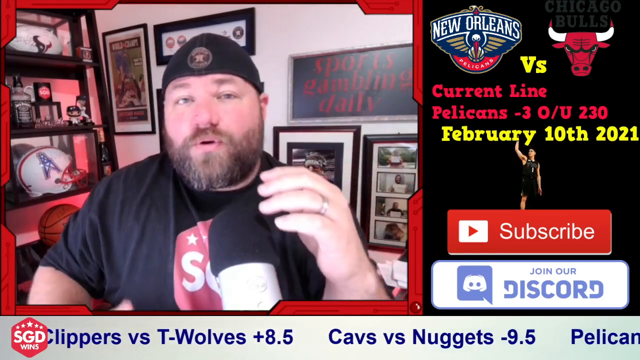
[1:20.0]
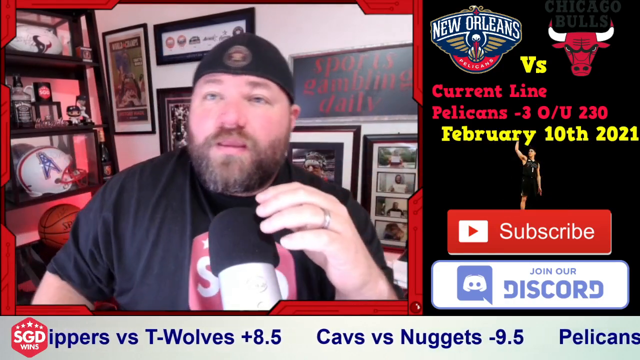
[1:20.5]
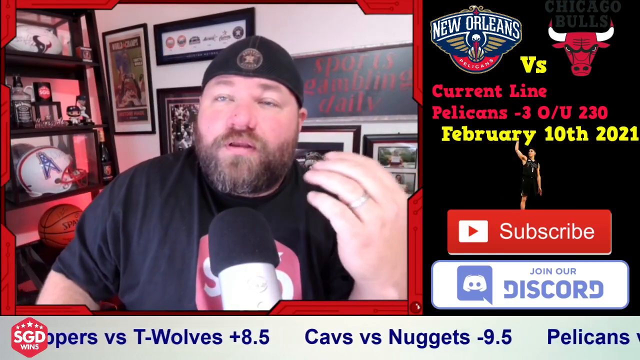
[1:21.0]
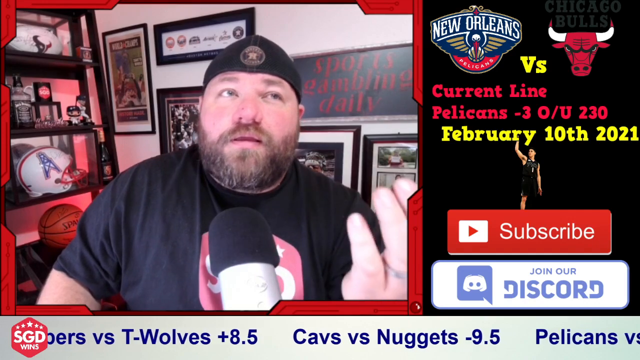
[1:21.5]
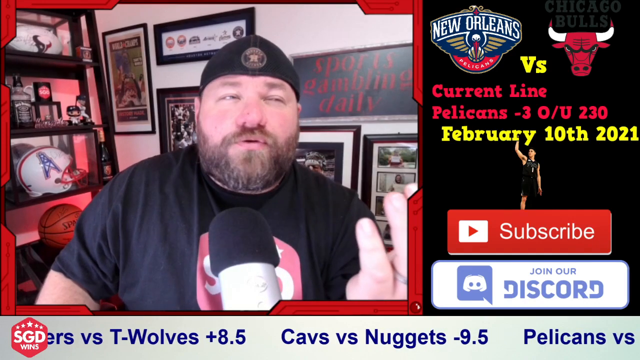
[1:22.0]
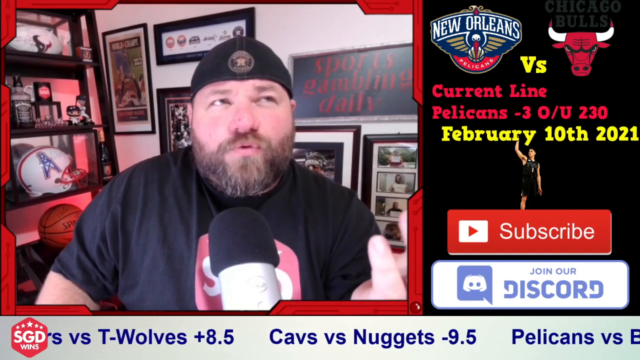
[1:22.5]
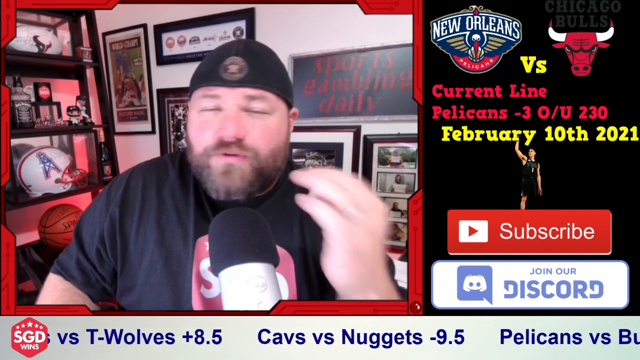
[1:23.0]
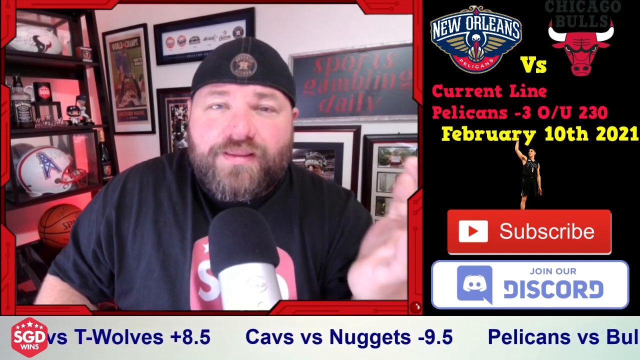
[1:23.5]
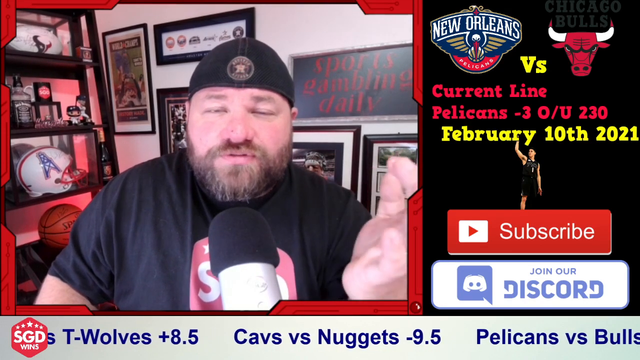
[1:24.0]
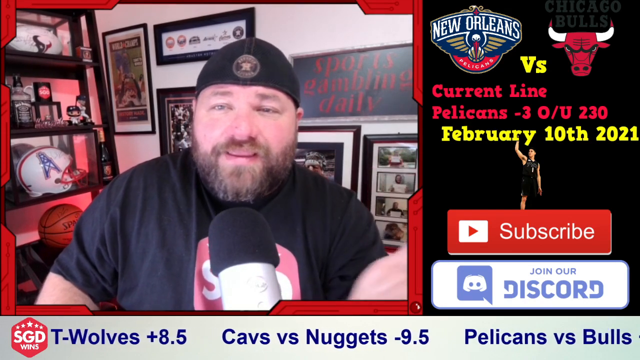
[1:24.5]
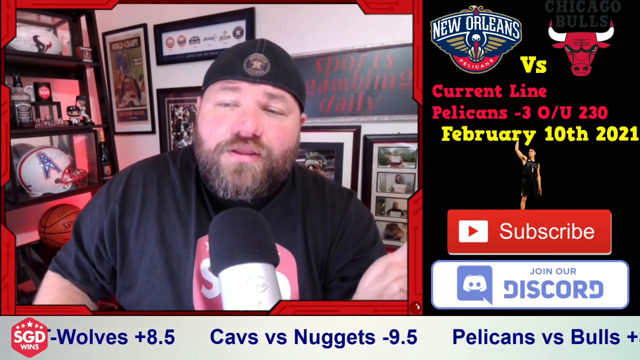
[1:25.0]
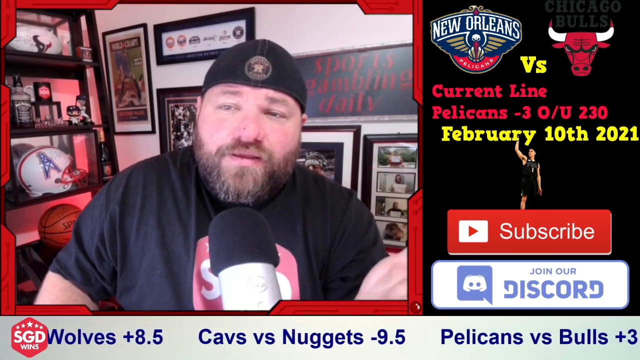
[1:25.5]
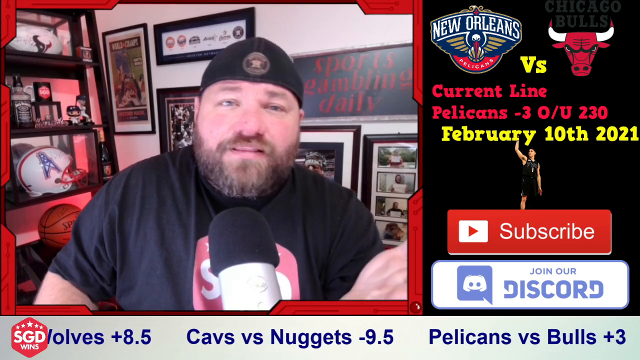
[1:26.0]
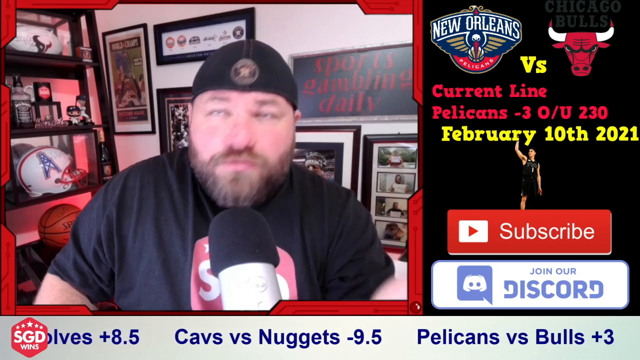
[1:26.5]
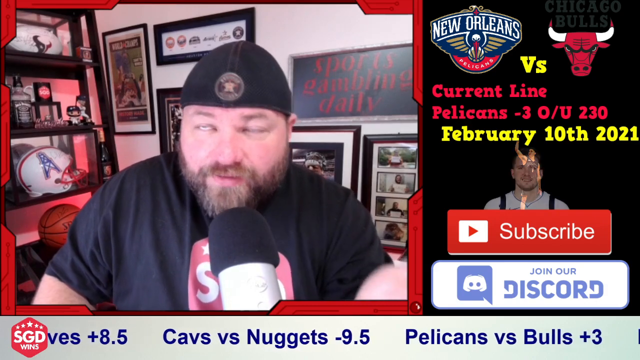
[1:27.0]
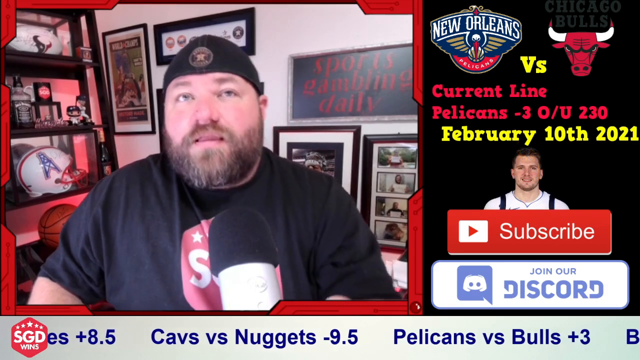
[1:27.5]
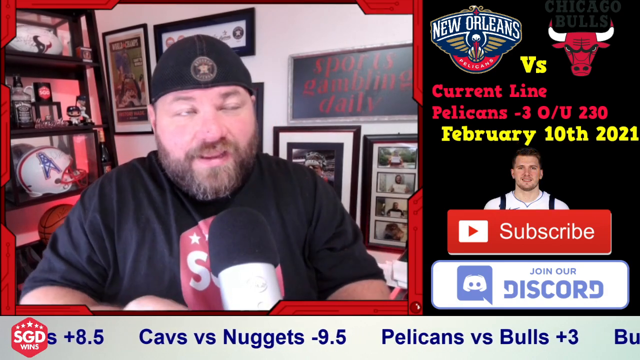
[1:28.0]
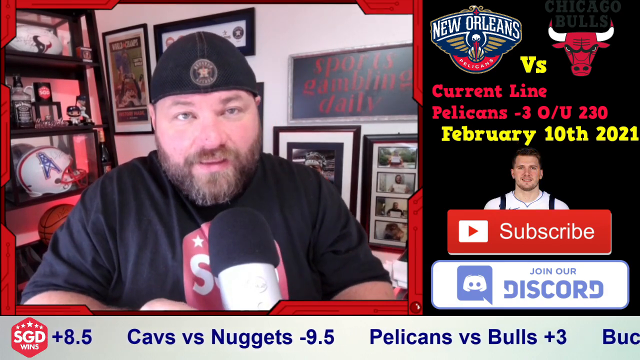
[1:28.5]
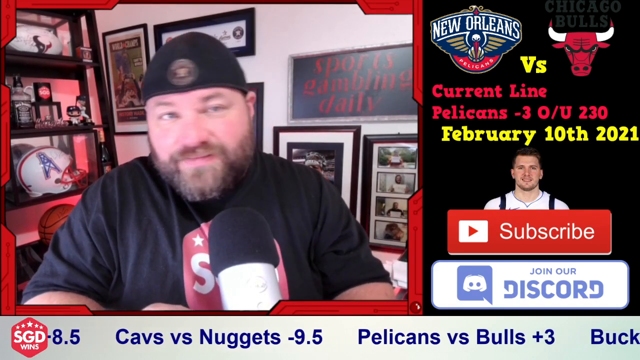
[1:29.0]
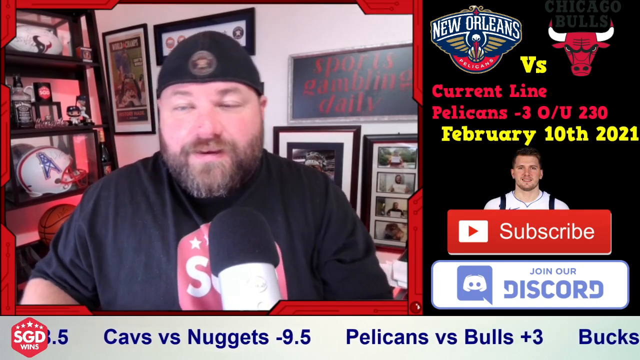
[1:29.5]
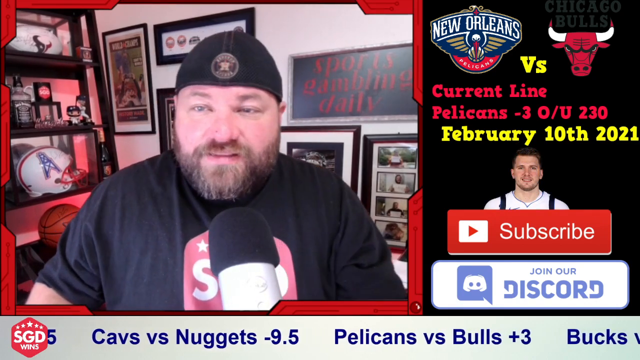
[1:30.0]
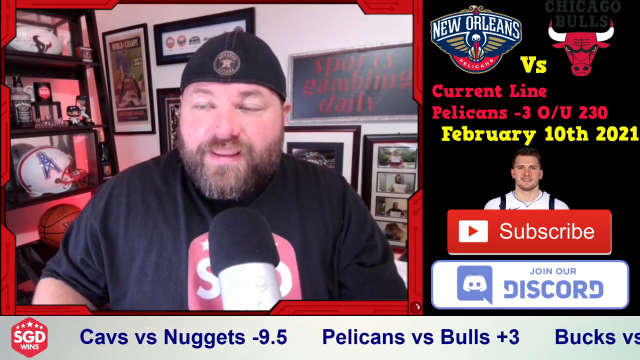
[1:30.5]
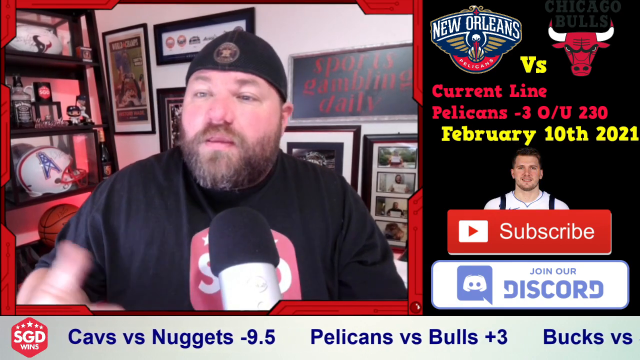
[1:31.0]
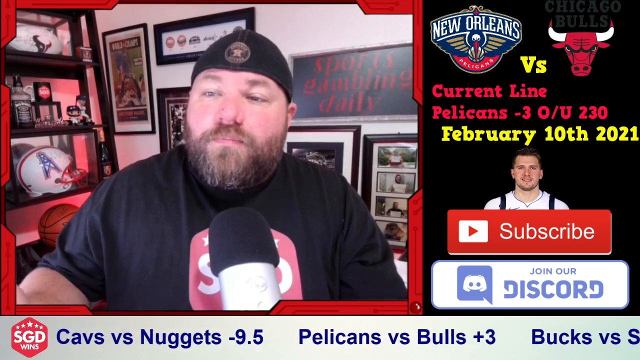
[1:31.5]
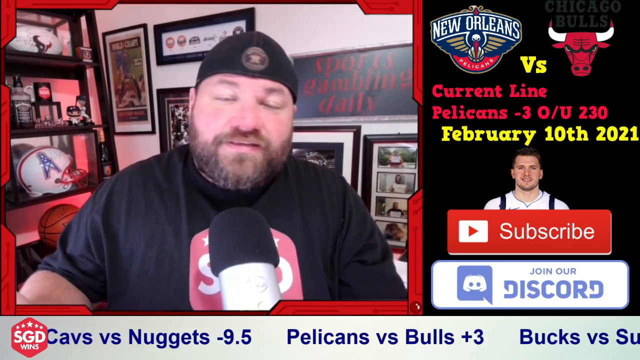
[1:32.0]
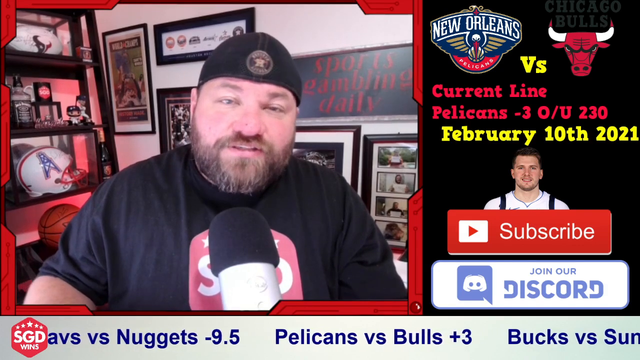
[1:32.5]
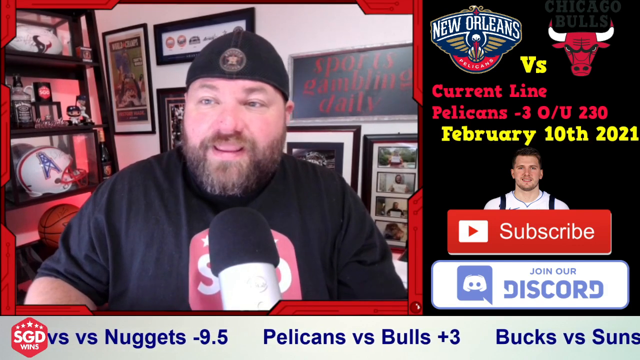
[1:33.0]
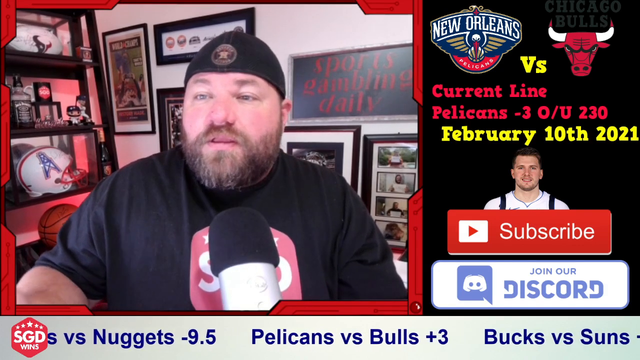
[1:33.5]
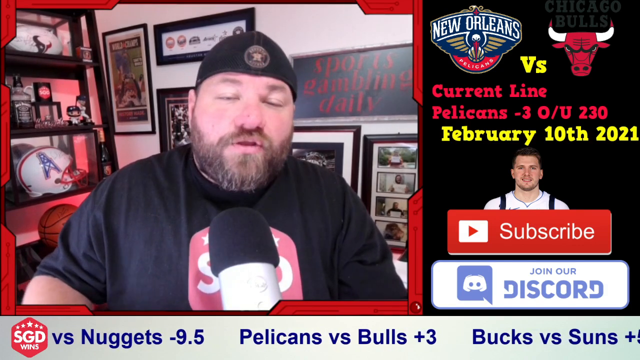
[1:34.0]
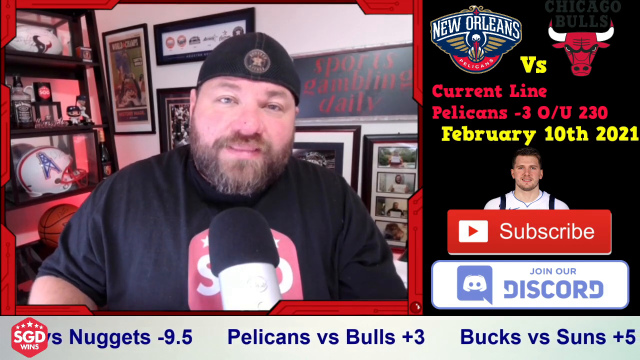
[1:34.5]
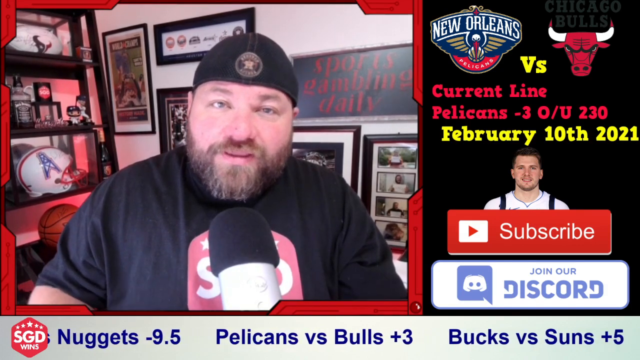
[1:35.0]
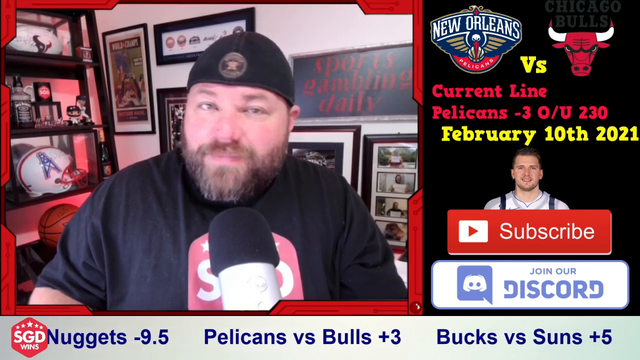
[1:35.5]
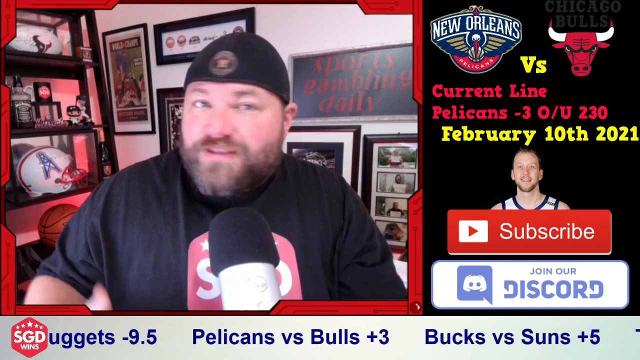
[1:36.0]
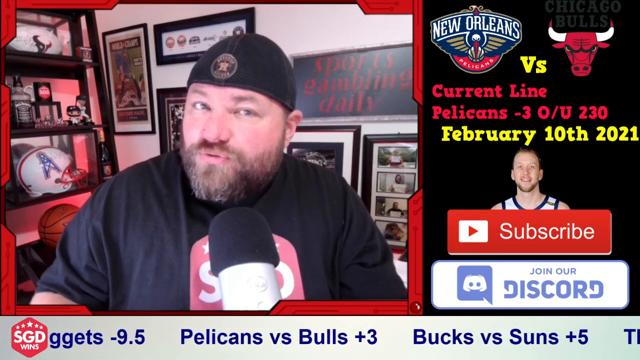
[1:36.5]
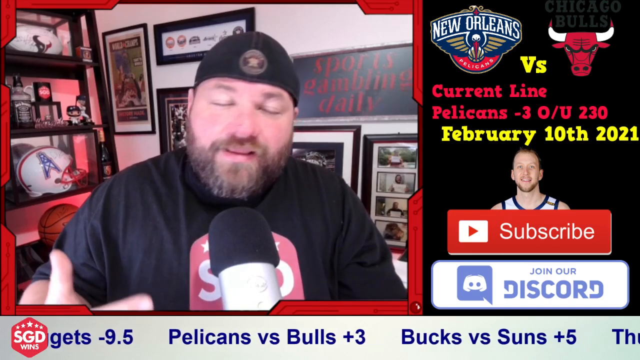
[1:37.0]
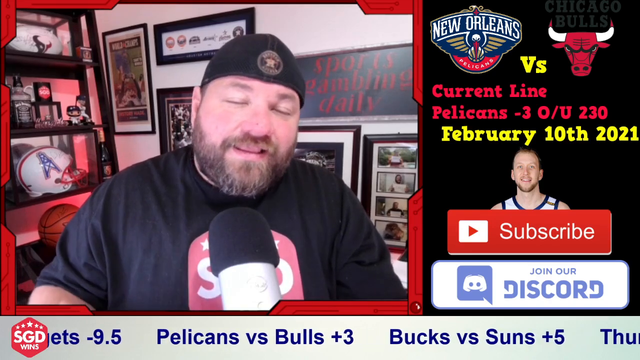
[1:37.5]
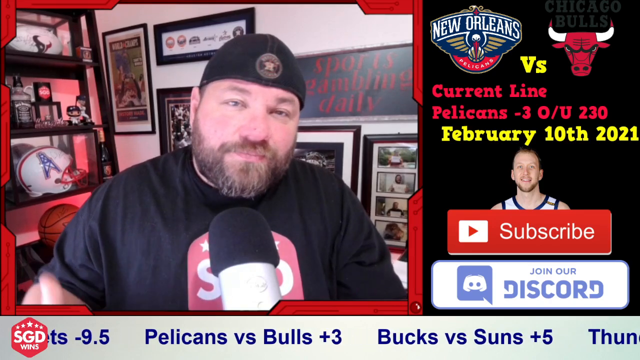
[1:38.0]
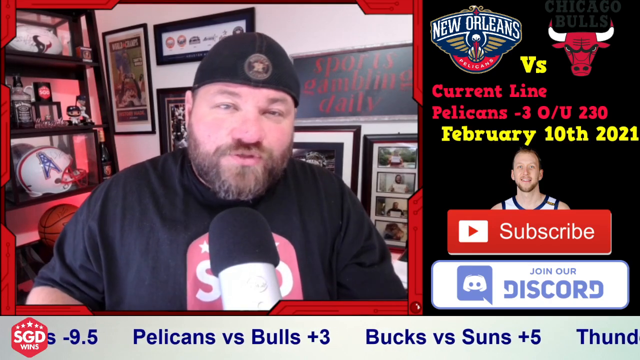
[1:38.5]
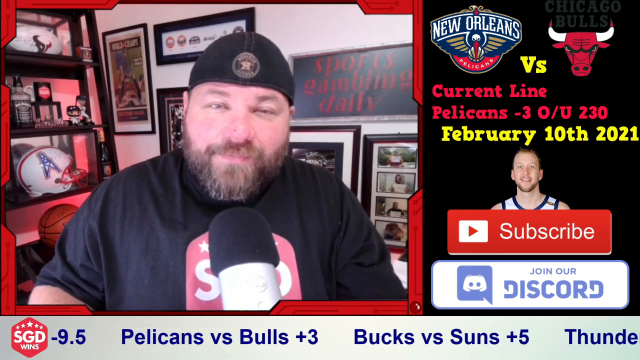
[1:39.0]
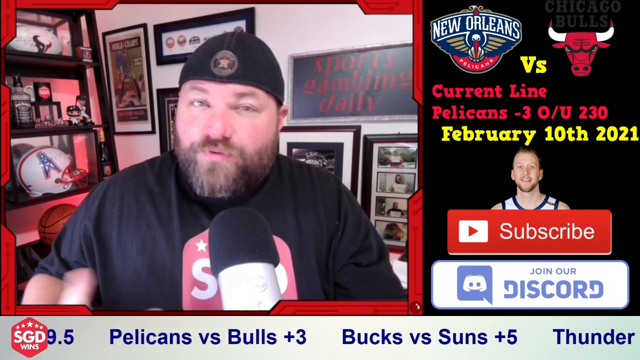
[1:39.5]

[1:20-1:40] A Caucasian man who looks very built and big, almost like a football player, talks with a big microphone in front of him; he could be a vlogger or someone brought on to talk about sports. Behind him are a Texans helmet and an Oilers helmet. The right side of the screen is all black with an emblem and text reading New Orleans versus Chicago Bulls, with just a picture of a Chicago bull and no words "Chicago Bulls". Text reads "current line Pelicans" and "-3 O/U 230" and "February 10th 2021". A picture of an NBA player in the middle of the right side keeps changing, often to a different player; one looks like Djokovic. The players are in different colored jerseys, and some are white while some are African American.